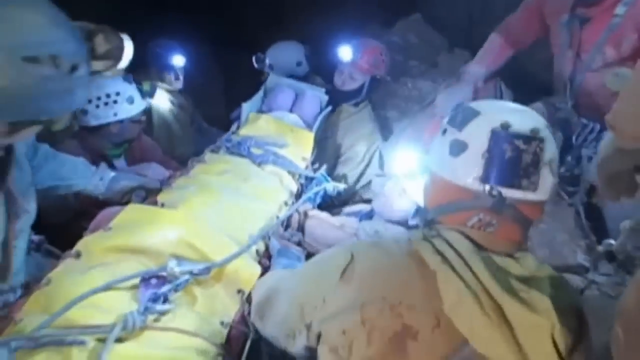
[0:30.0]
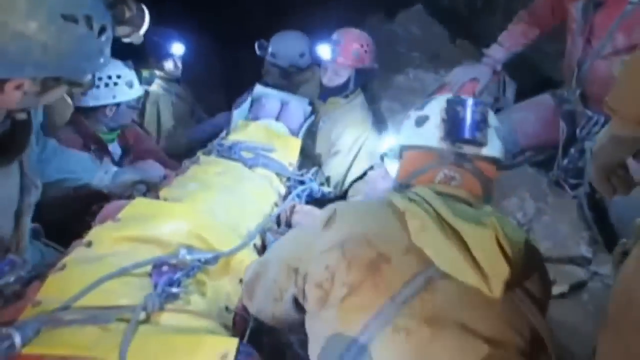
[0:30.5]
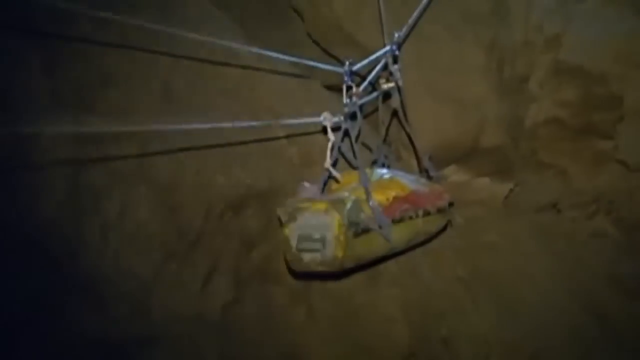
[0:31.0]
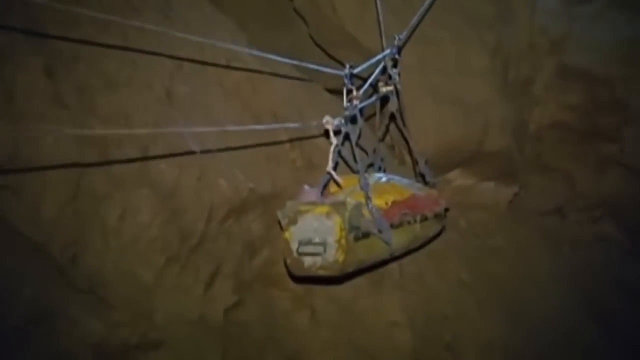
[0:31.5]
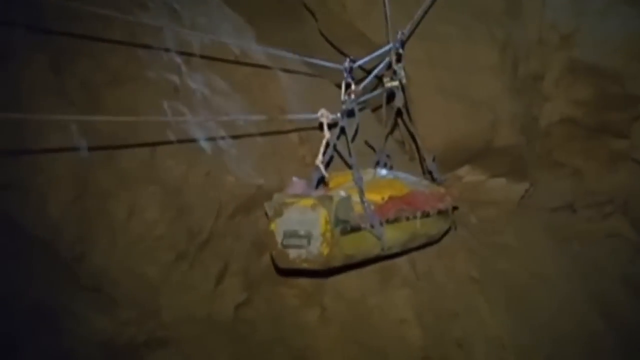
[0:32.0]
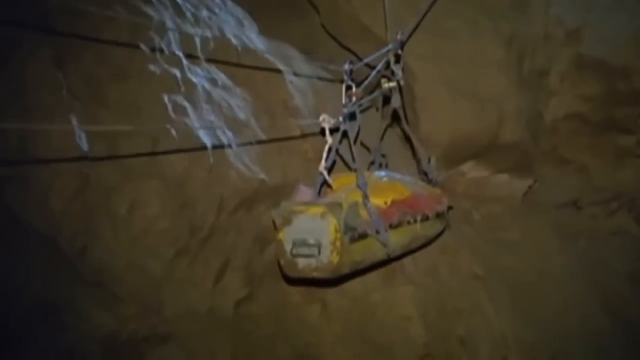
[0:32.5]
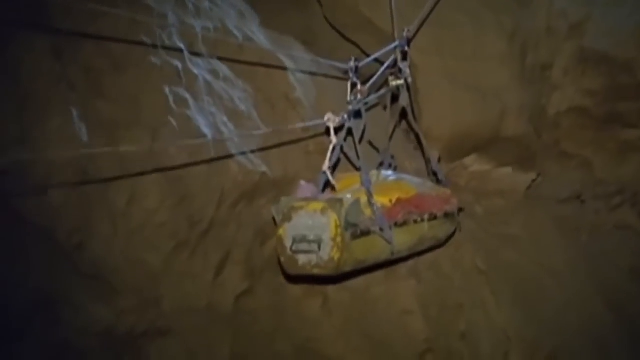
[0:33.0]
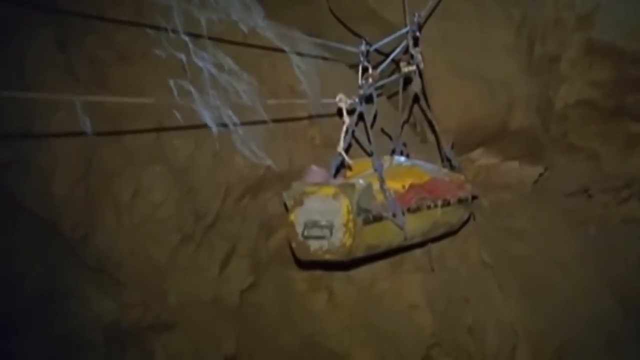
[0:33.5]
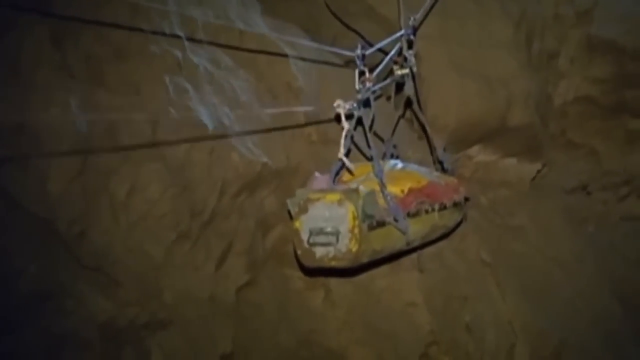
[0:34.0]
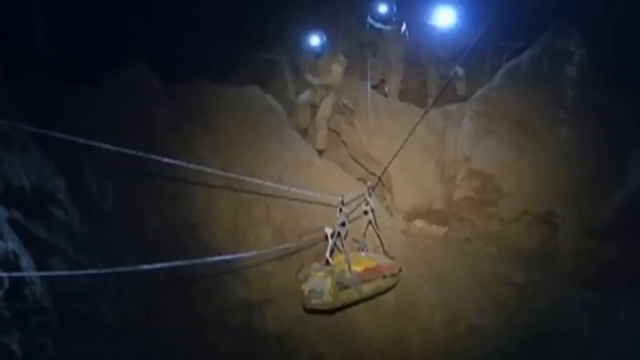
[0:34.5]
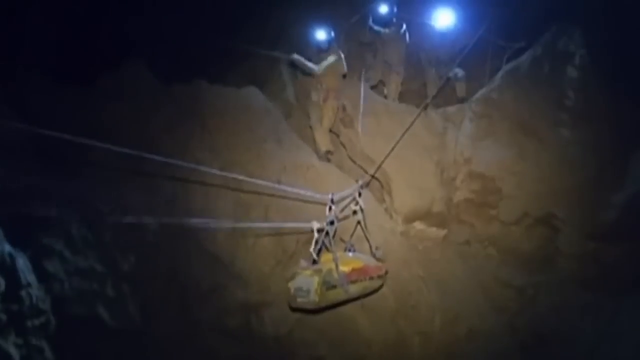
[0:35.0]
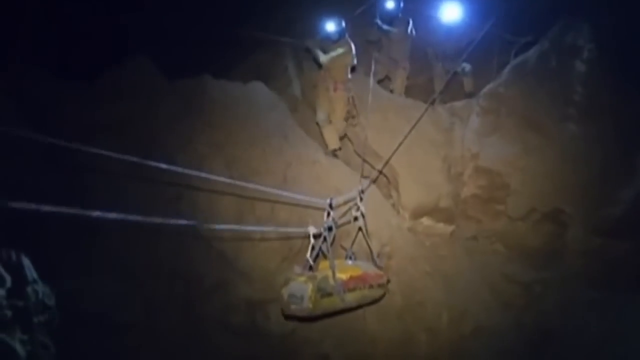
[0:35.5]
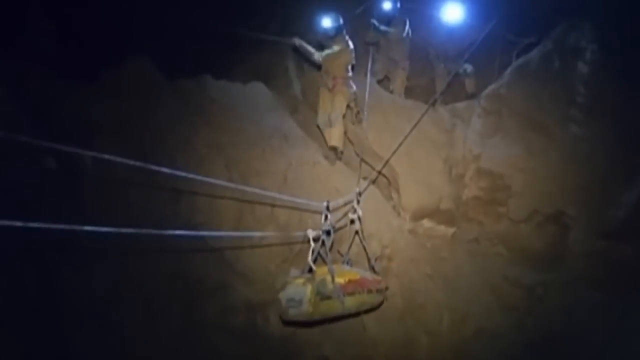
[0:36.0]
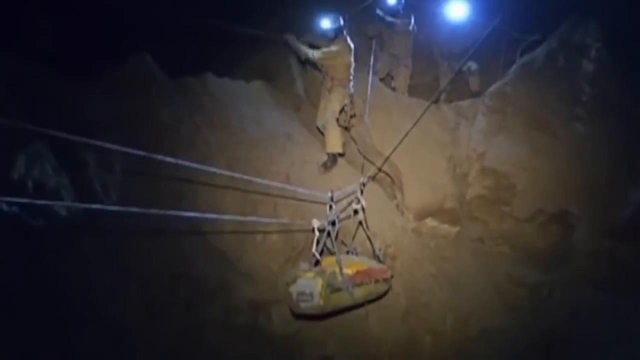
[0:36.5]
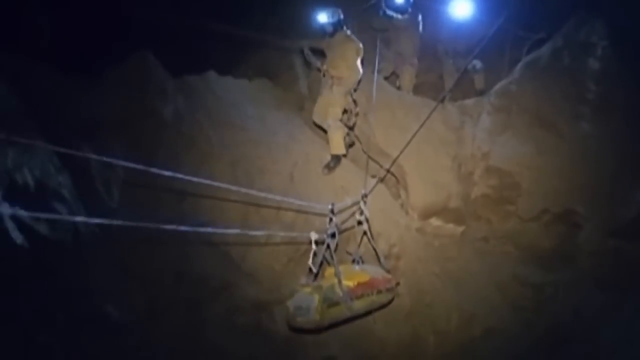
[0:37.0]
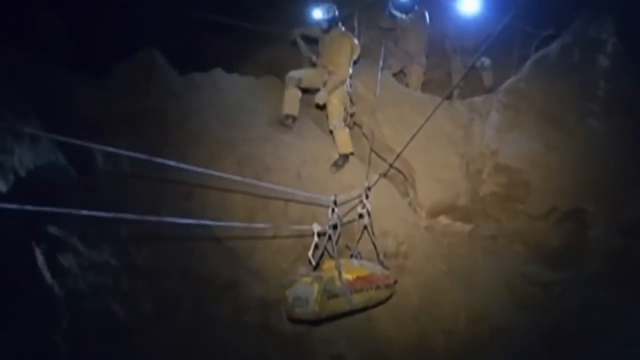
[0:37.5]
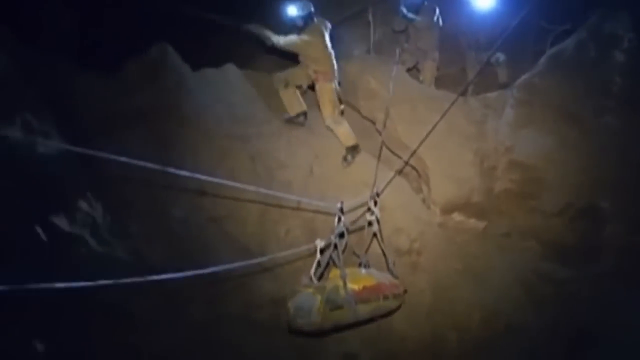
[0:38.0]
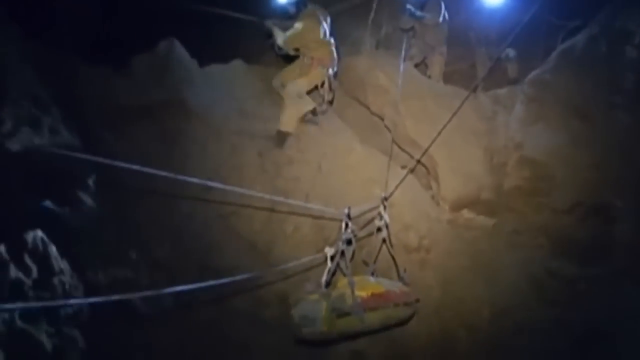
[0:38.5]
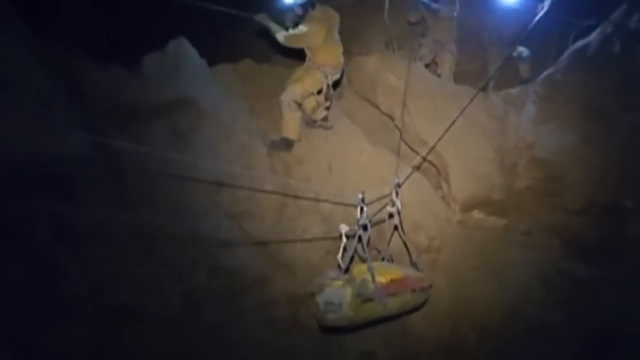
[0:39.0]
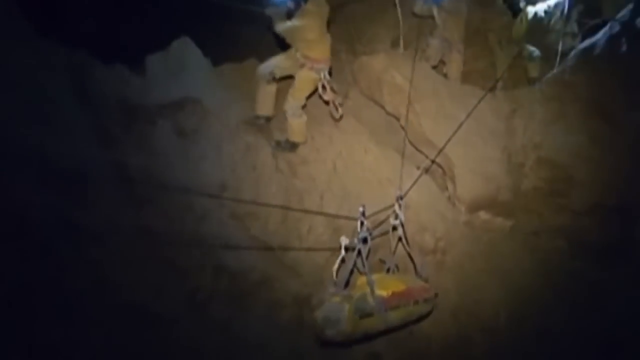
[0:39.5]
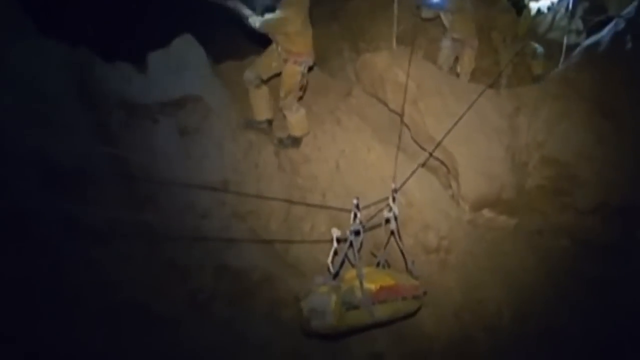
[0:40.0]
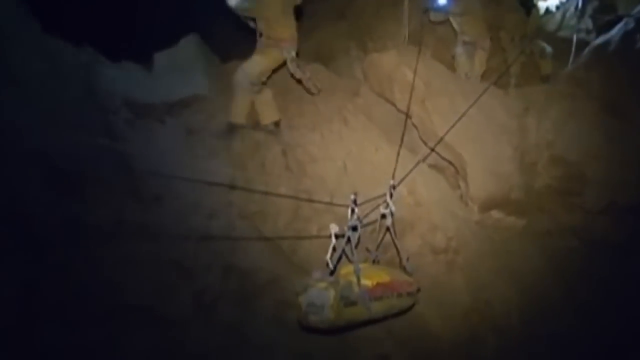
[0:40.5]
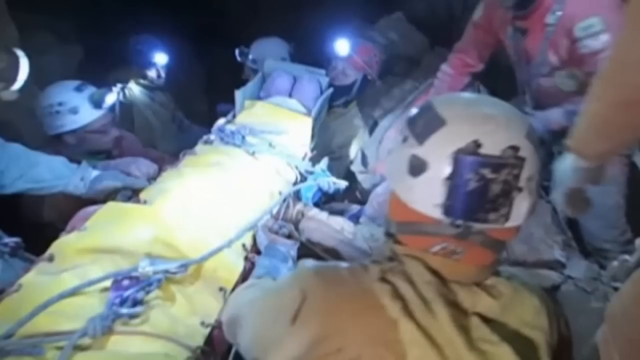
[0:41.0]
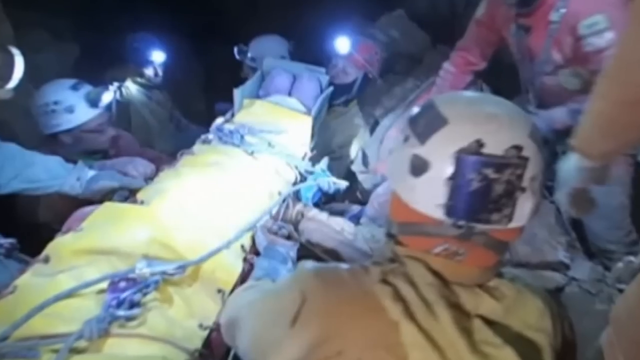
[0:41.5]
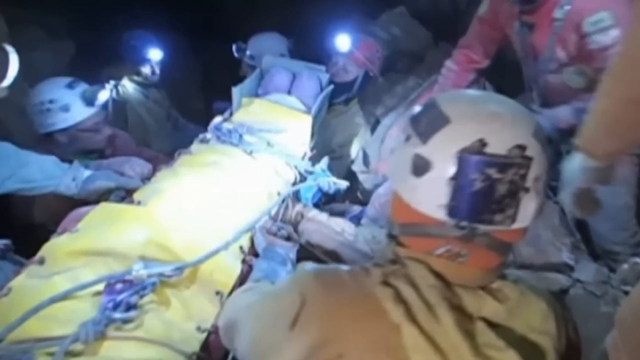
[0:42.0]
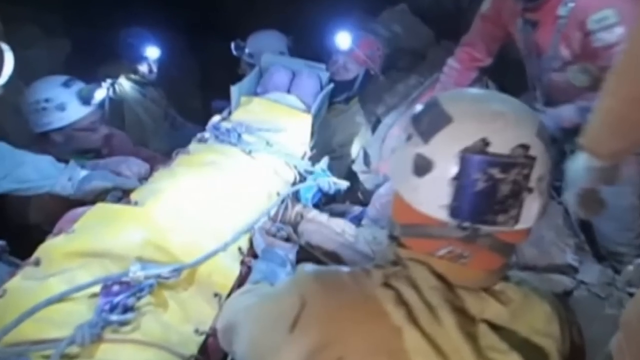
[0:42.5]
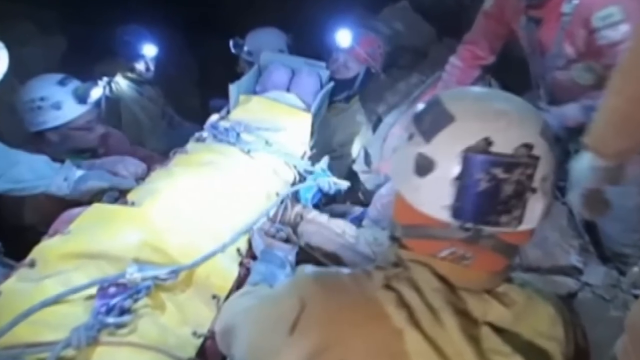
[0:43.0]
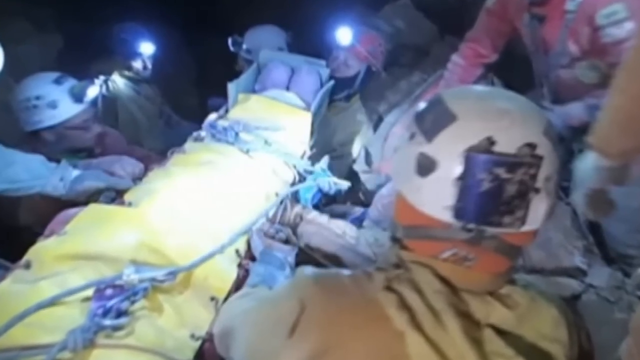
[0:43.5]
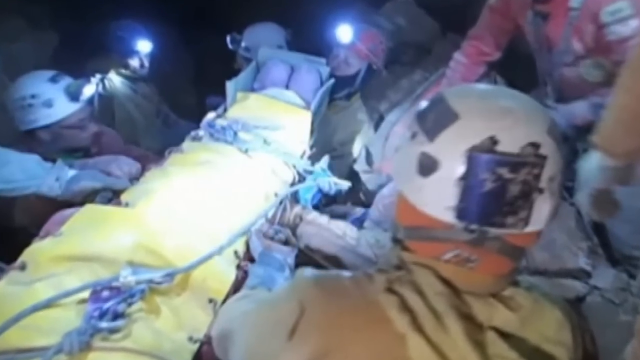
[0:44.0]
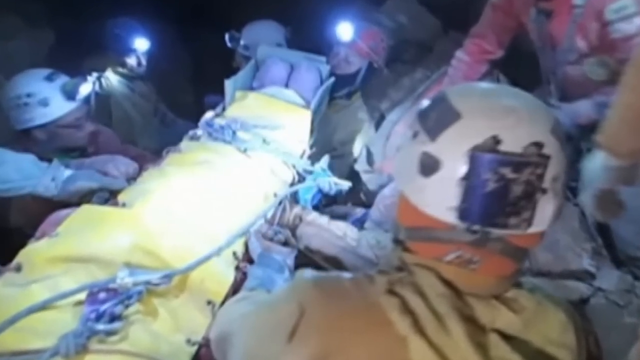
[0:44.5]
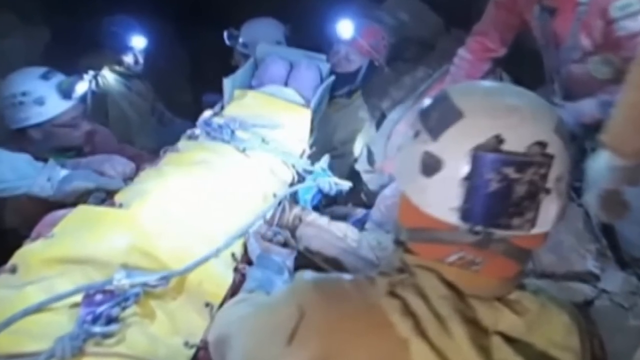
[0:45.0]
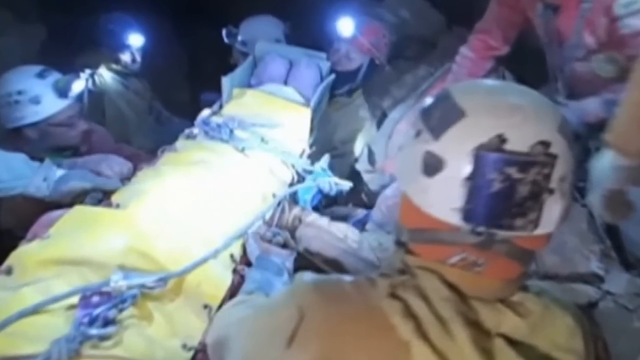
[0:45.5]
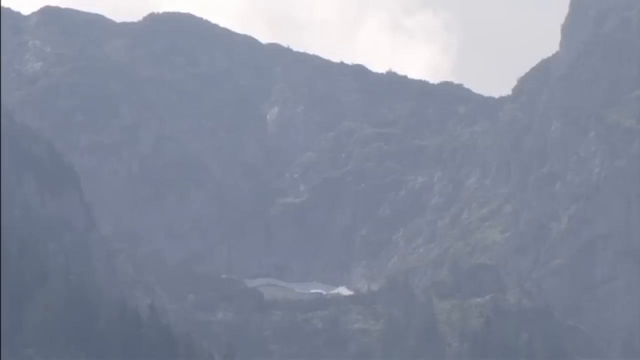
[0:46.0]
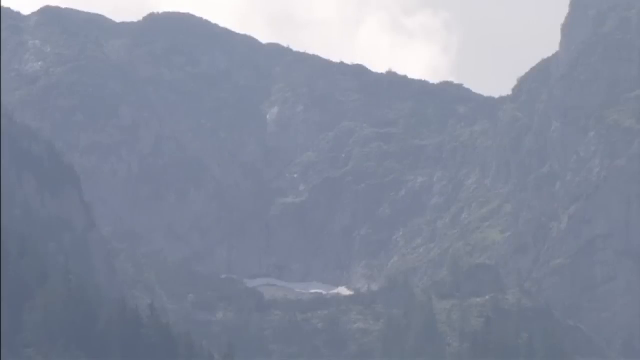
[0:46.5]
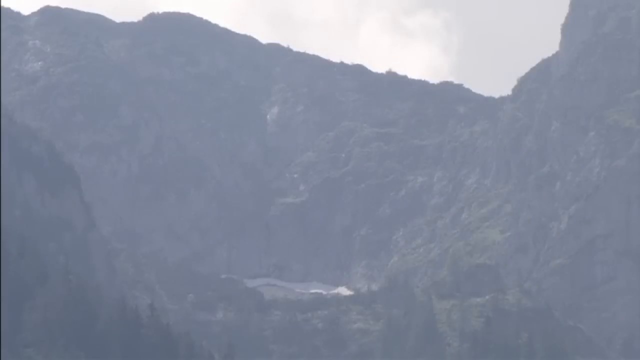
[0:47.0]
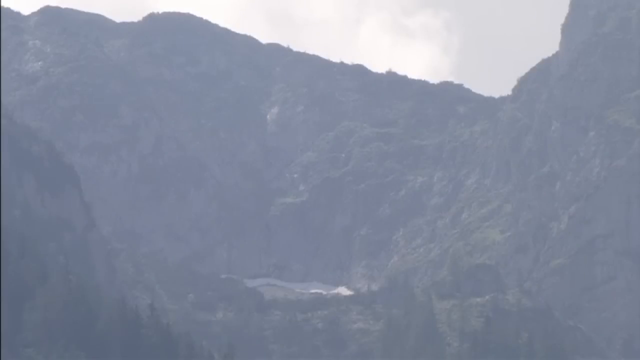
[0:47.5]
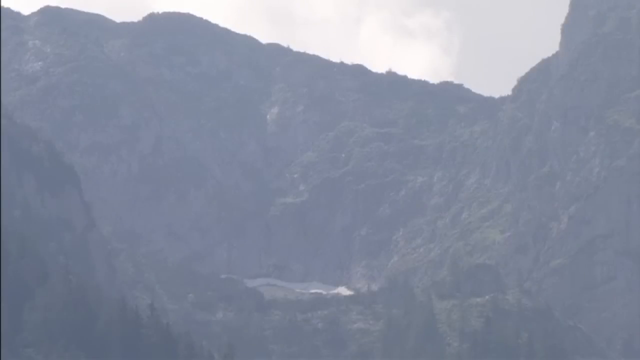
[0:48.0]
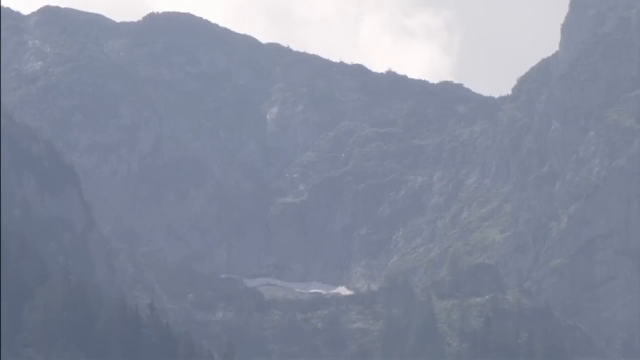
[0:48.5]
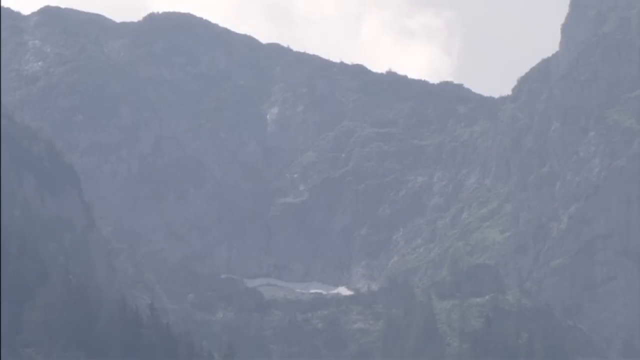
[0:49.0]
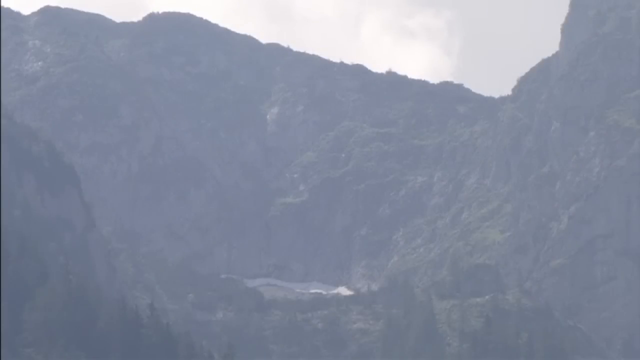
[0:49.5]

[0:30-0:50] A cave rescue operation is underway. A person is kind of being strapped to a board while a group of cave workers is kind of tightly grouped together in one area. The board with the person on it is rigged to a system of multiple sets of ropes and pulleys, and people up higher pull on the system to move the rope and try to get the people out. The view then returns to the more confined space seen earlier, where the person is kind of held up by another group of people while ropes are tied around the person's body to hold them in place. Seven or eight workers or cave divers are there helping, wearing gear including helmets, flashlights, gloves and jackets. An outside view of the mountain or cave area follows, kind of picturesque, seen from the outside.